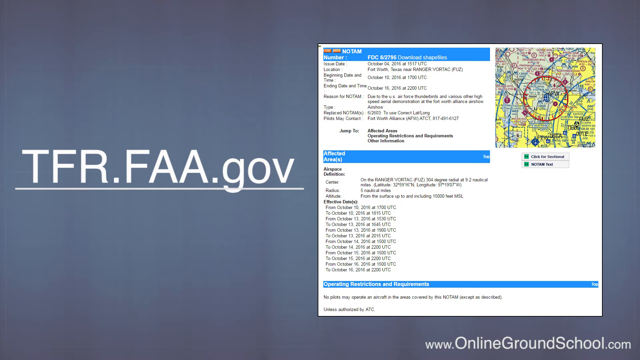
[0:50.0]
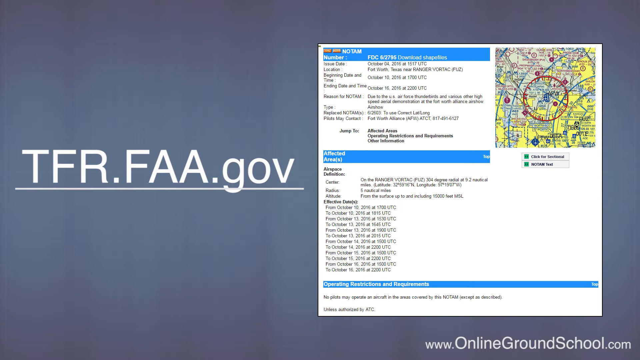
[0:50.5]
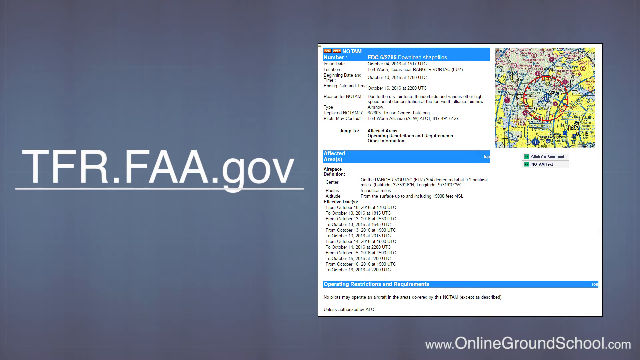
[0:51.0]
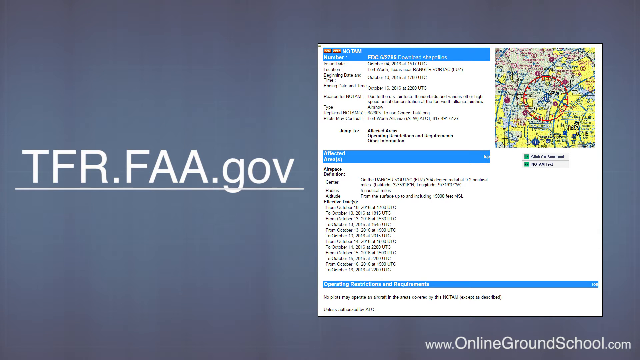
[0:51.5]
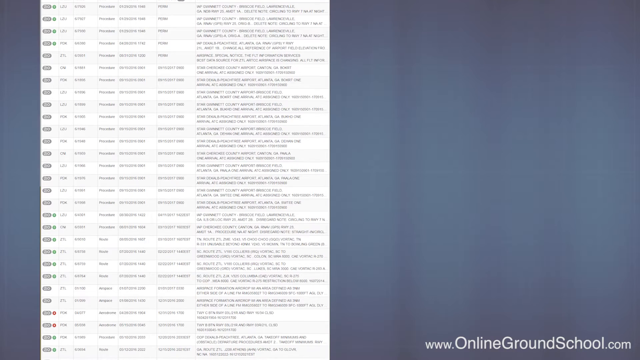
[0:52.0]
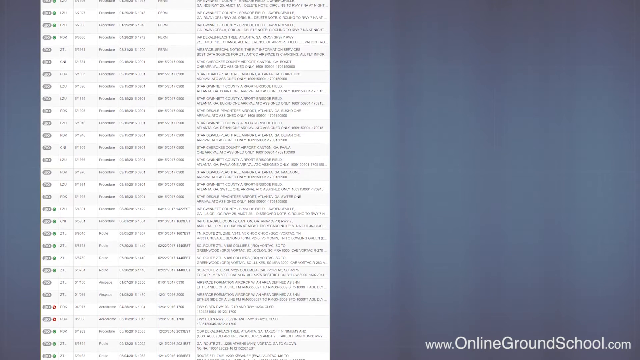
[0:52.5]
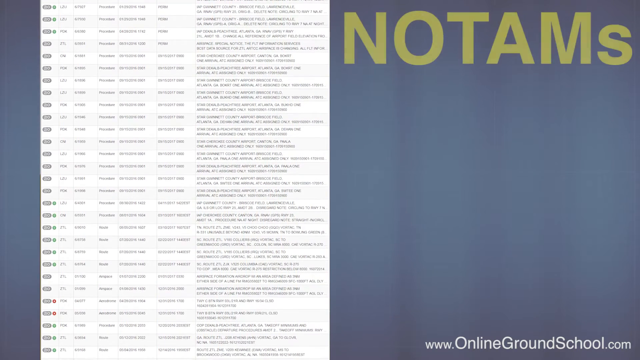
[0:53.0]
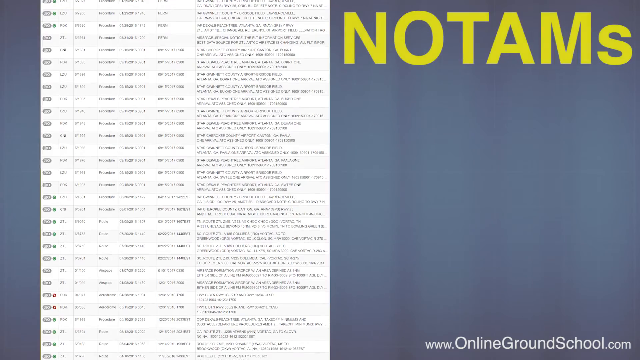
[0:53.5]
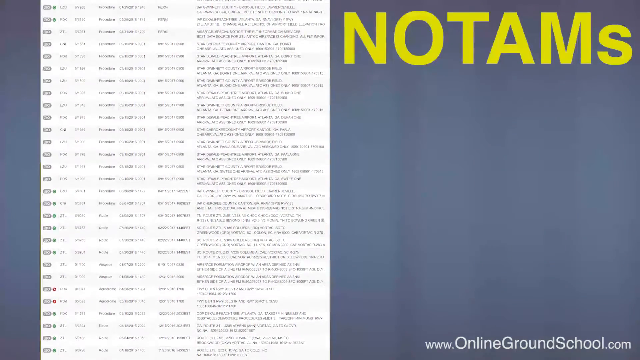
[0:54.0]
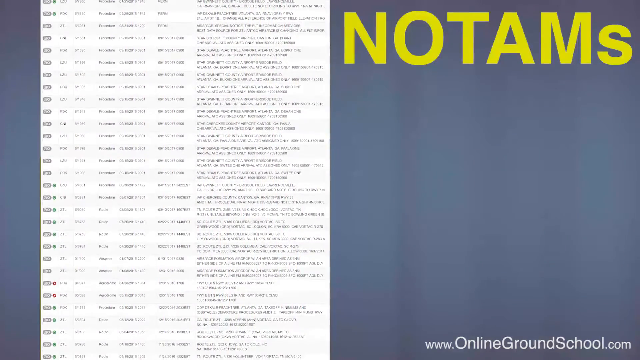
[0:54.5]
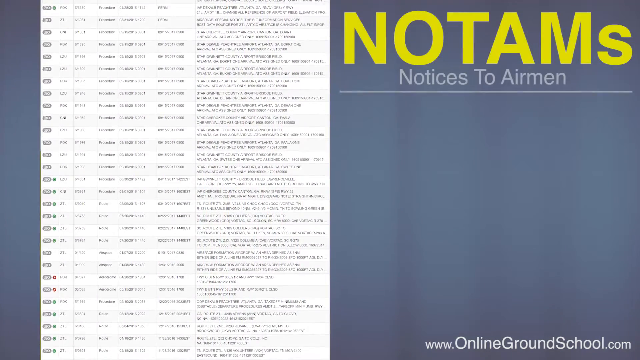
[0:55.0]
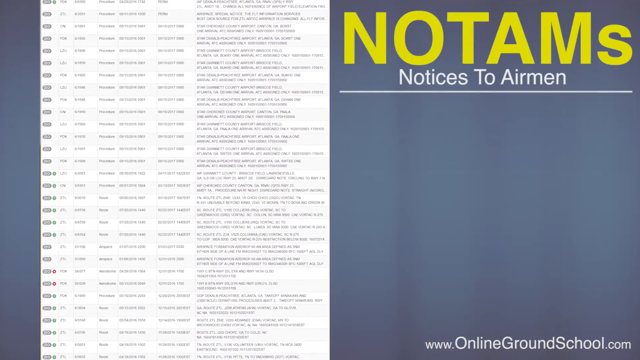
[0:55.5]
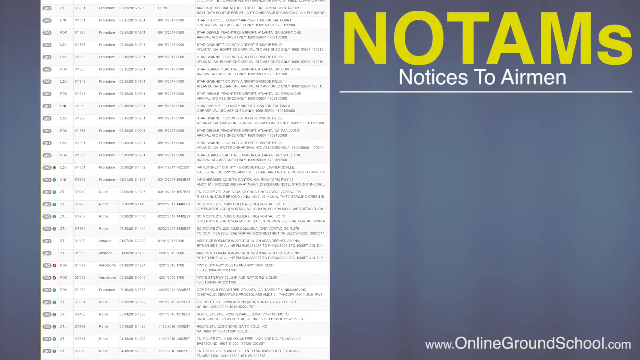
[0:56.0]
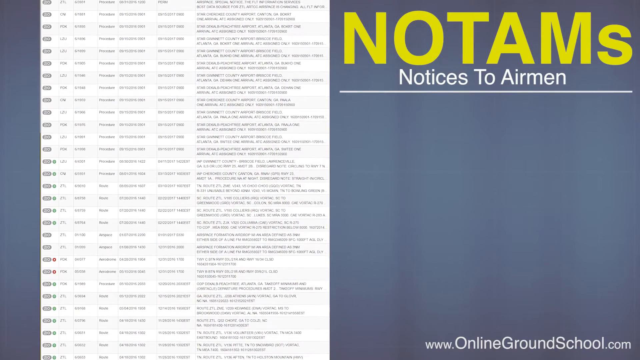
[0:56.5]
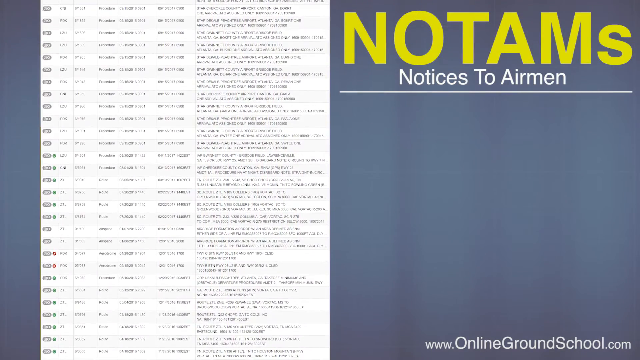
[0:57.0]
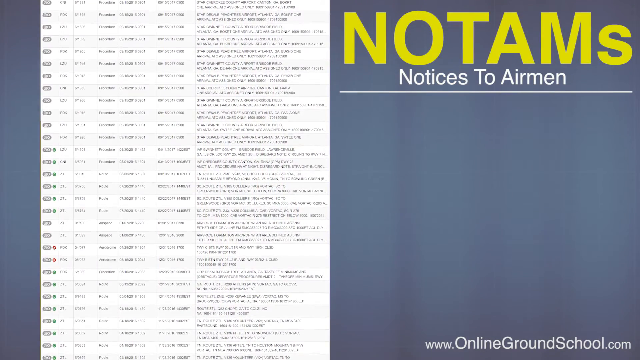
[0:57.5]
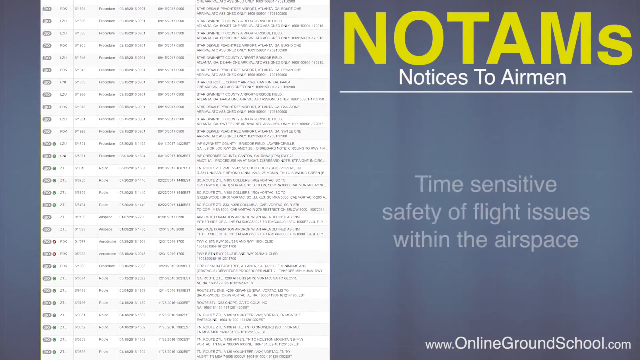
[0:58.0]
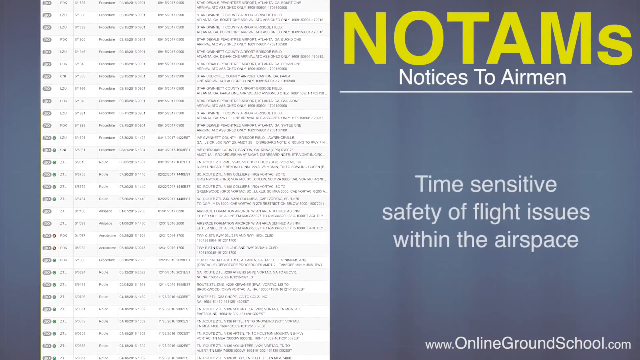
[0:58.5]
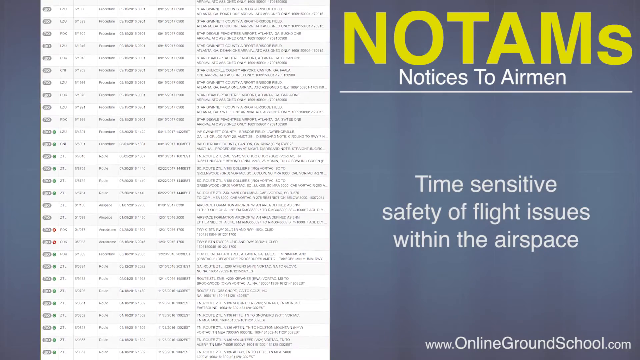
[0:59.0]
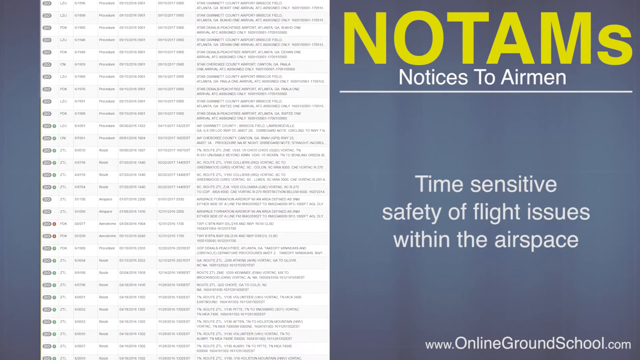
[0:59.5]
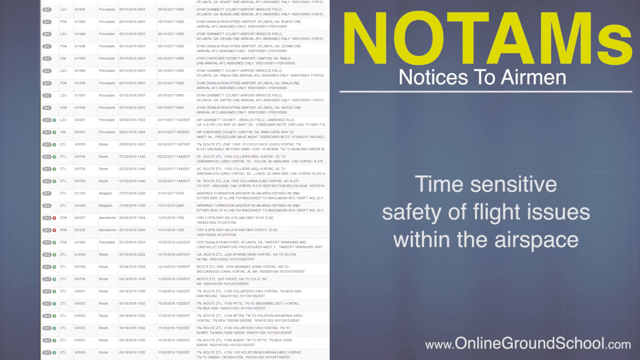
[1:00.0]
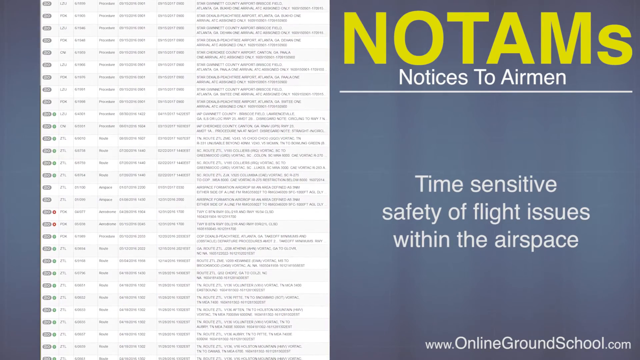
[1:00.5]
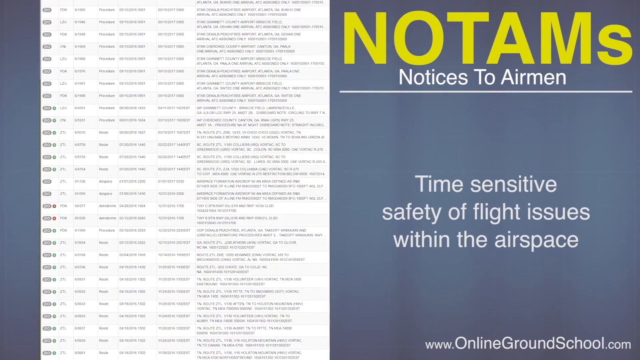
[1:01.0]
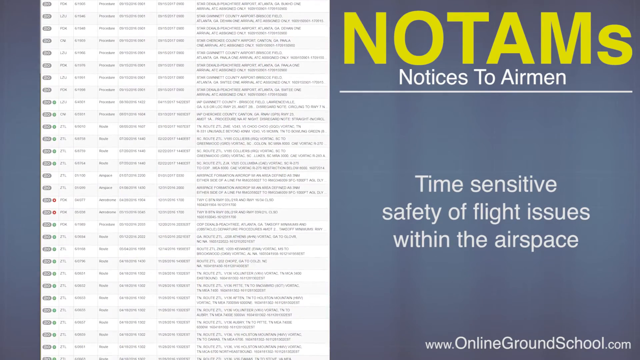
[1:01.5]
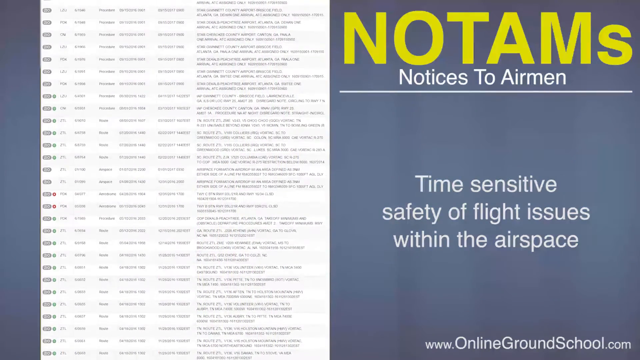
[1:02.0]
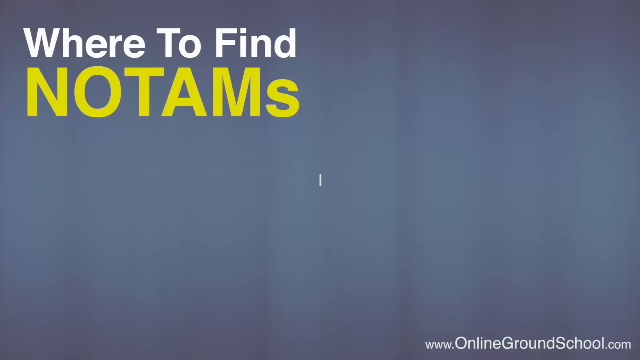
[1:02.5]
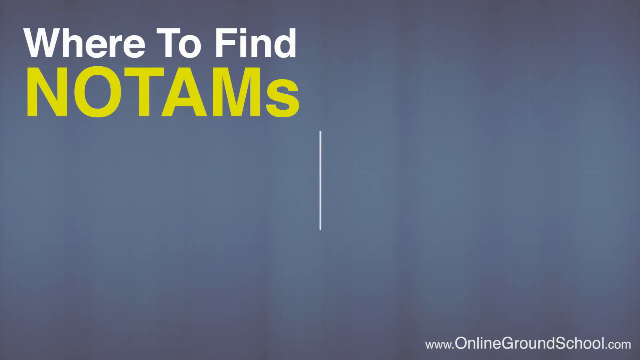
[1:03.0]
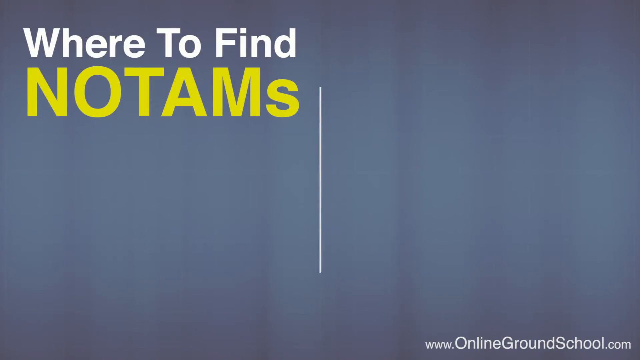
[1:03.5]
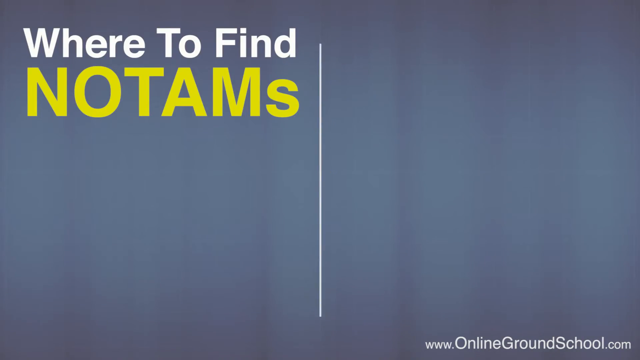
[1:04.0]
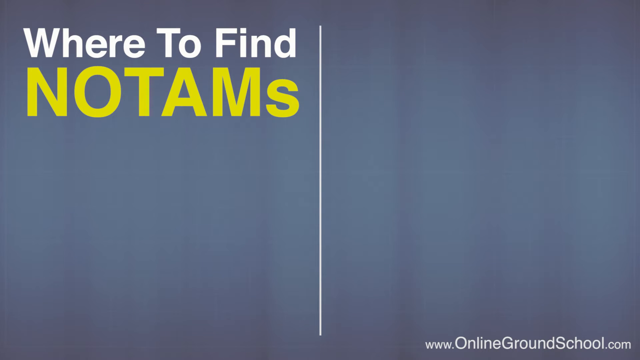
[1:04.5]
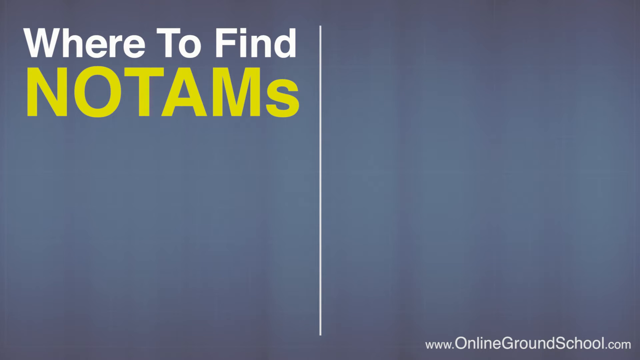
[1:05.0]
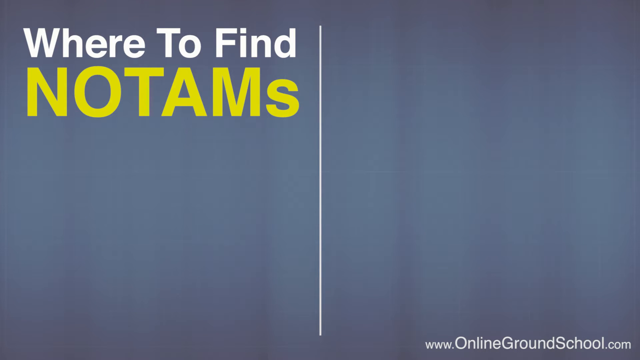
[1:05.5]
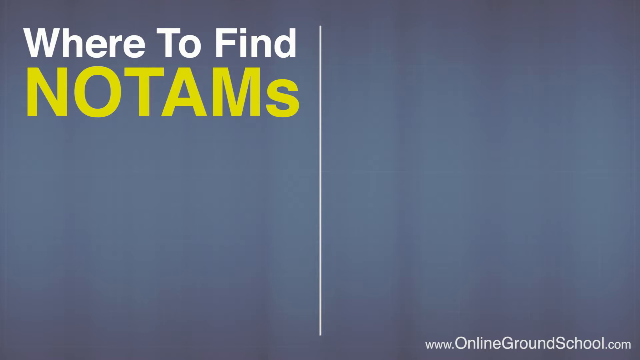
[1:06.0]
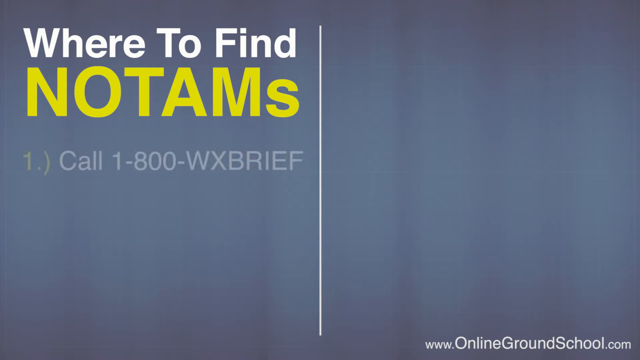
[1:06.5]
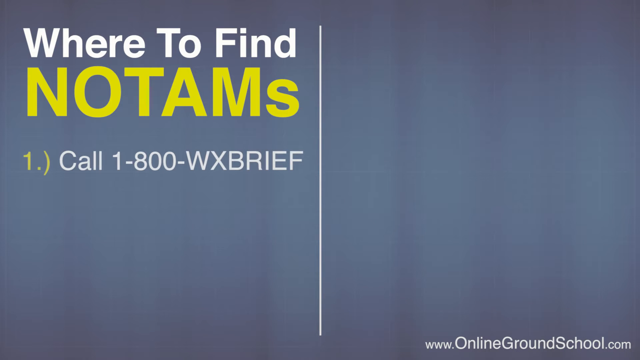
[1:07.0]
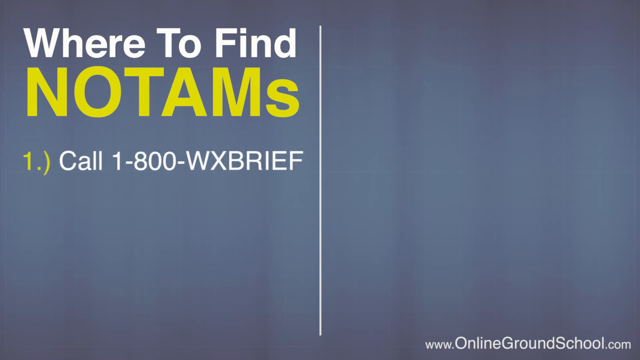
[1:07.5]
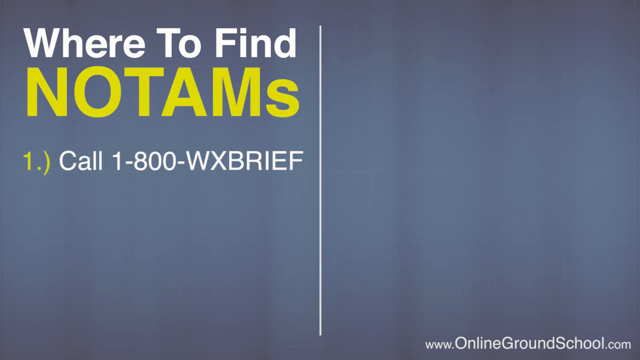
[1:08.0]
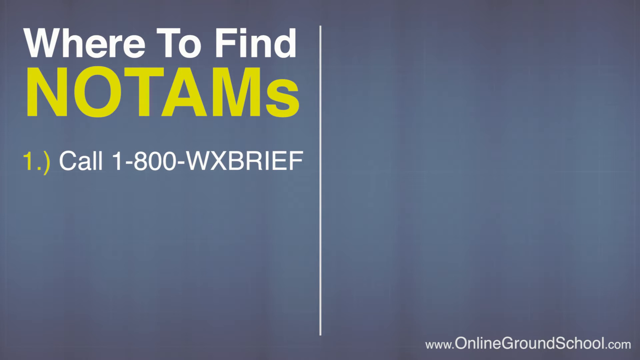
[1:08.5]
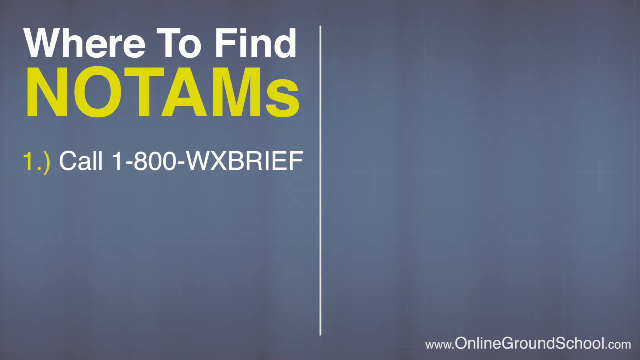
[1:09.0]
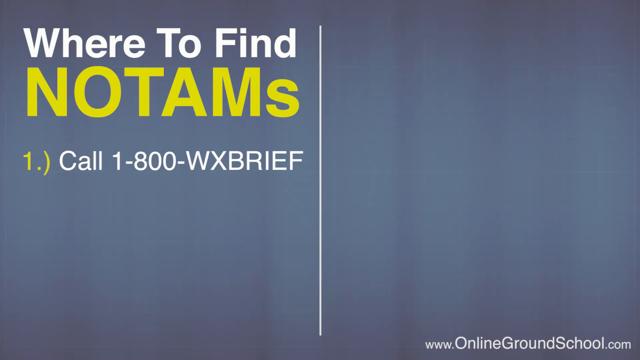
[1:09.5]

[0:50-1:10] A solid blue-grey background screen shows, on the left side, a single underlined line of text reading "tfr.faa.gov", and on the right a blurry static image that includes some data and a small map. The video transitions, keeping the same blue-grey background, and a blurry document appears on the left, slowly being scrolled down; it appears to be some kind of table with data. As it scrolls, text appears on the right reading "NOTAMs, notices to airmen", with a paragraph below it reading "time-sensitive safety or flight issues within the airspace". The screen then transitions, keeping the same background, and is split in half by a solid vertical white line. On the left side, text reads "Where to find NOTAMs", and one bullet point appears reading "Call 1-800-WXBRIEF".